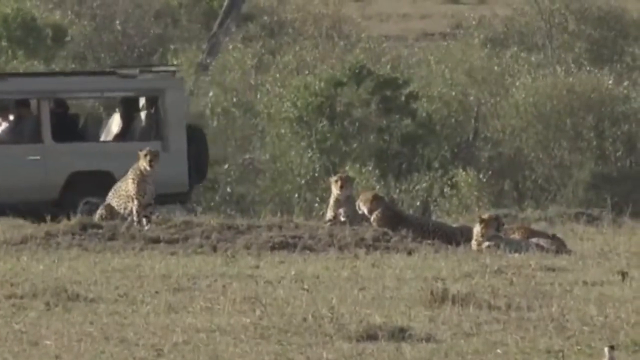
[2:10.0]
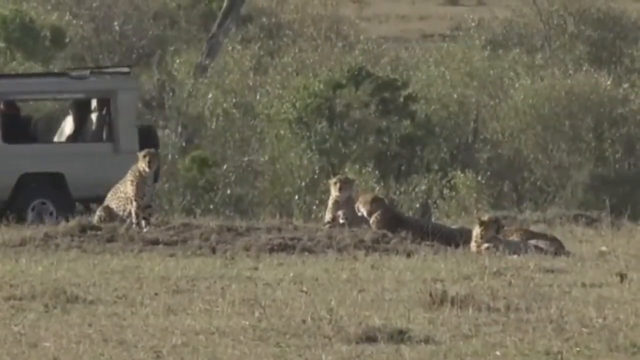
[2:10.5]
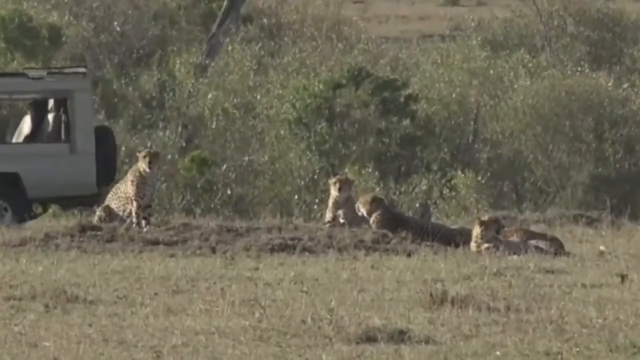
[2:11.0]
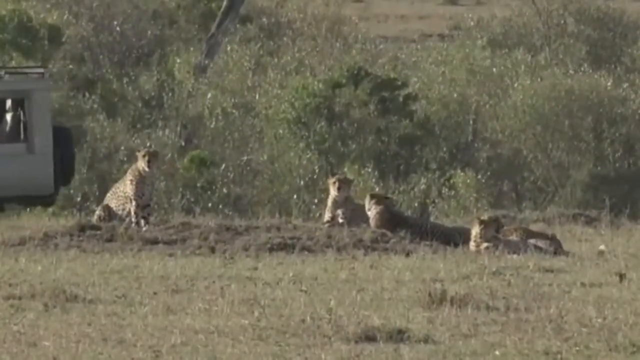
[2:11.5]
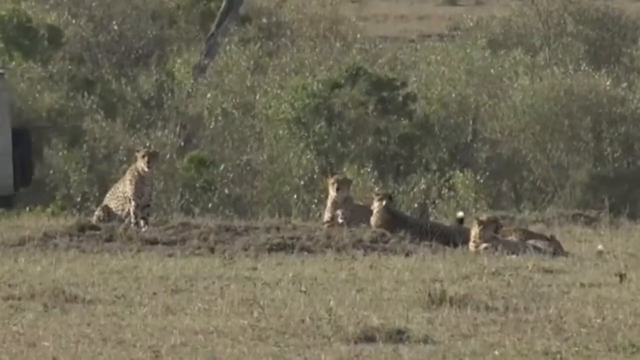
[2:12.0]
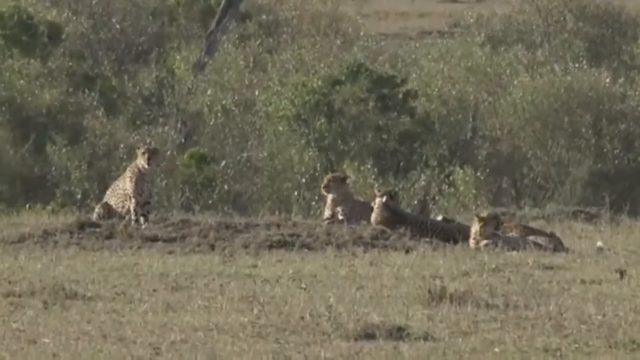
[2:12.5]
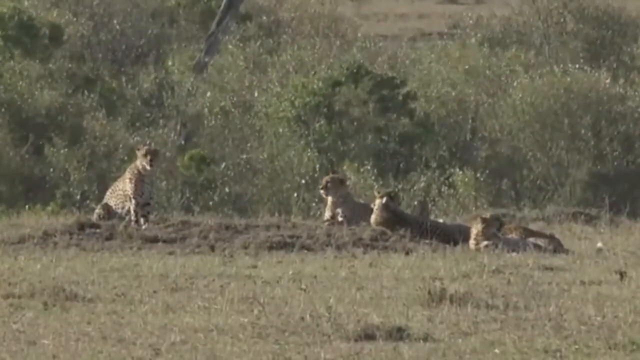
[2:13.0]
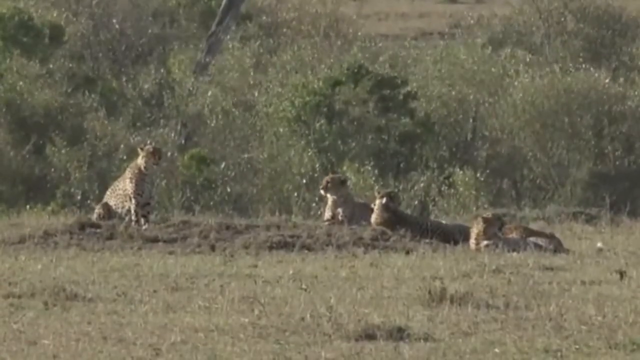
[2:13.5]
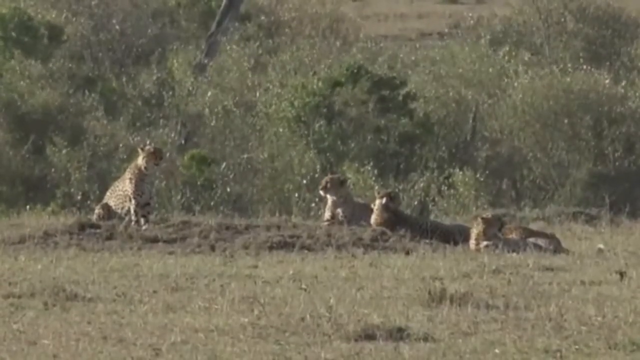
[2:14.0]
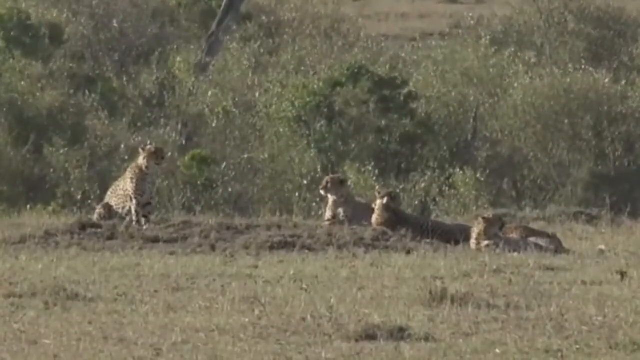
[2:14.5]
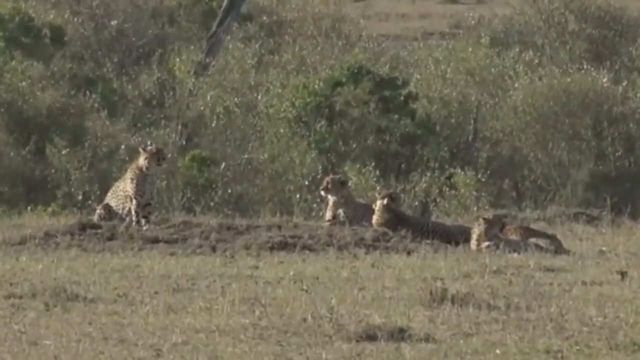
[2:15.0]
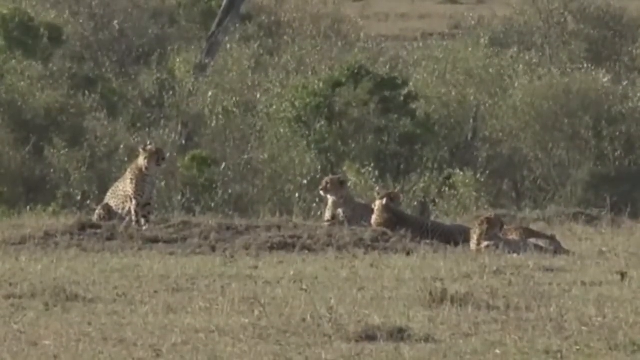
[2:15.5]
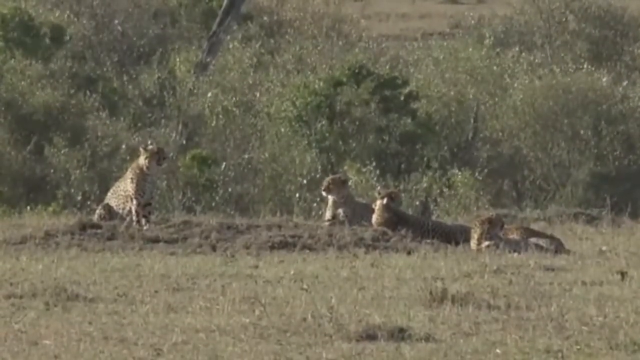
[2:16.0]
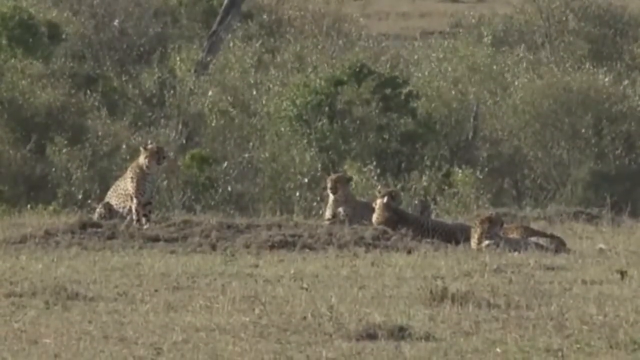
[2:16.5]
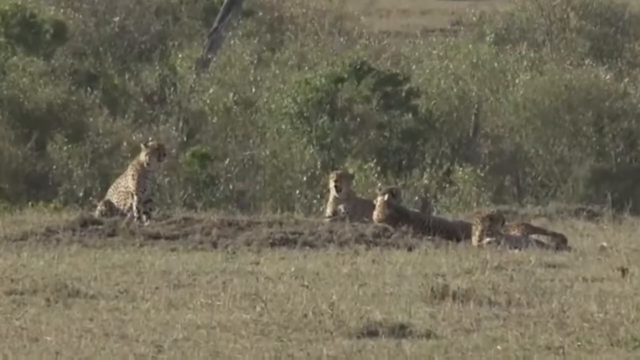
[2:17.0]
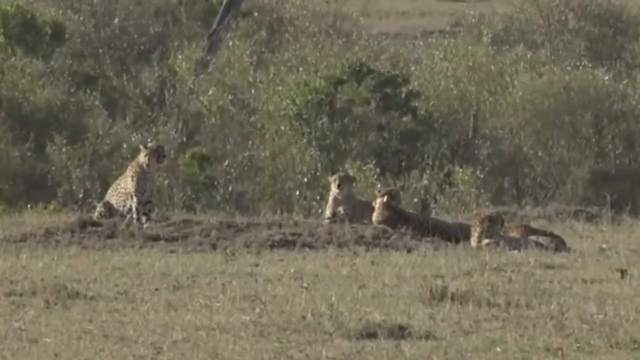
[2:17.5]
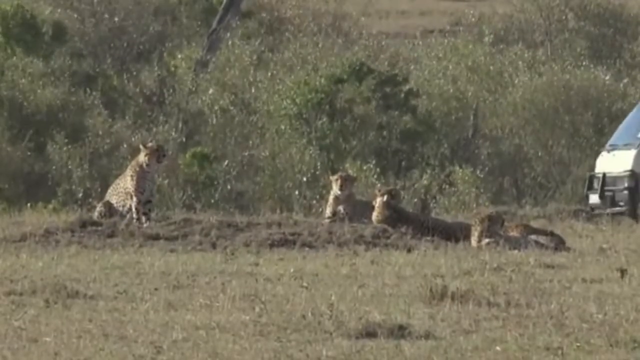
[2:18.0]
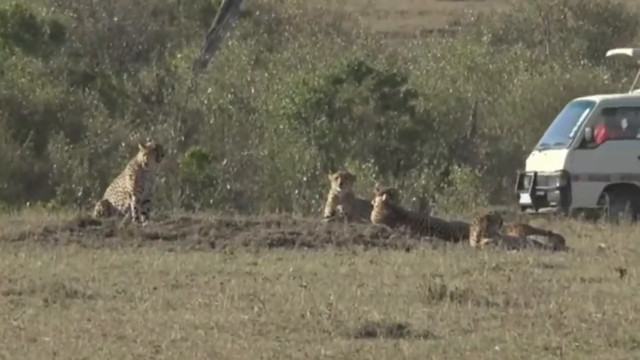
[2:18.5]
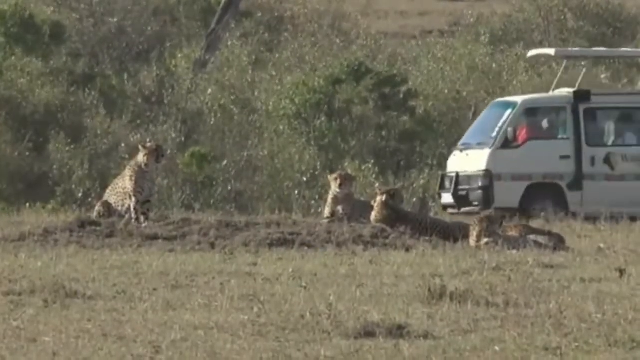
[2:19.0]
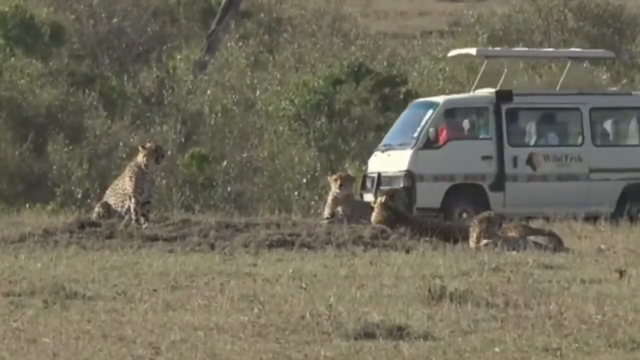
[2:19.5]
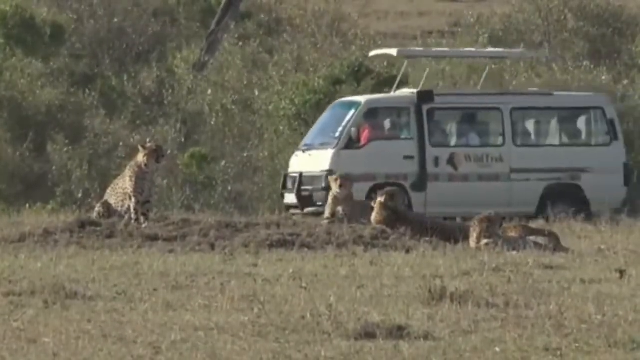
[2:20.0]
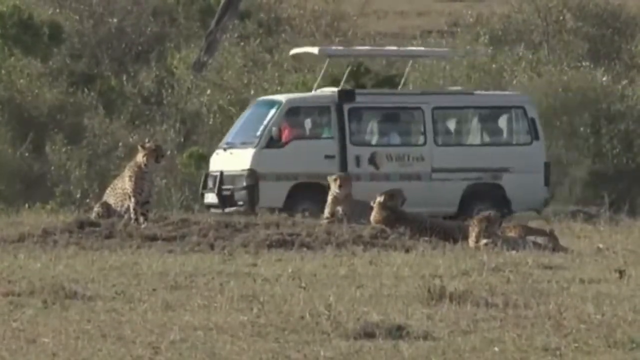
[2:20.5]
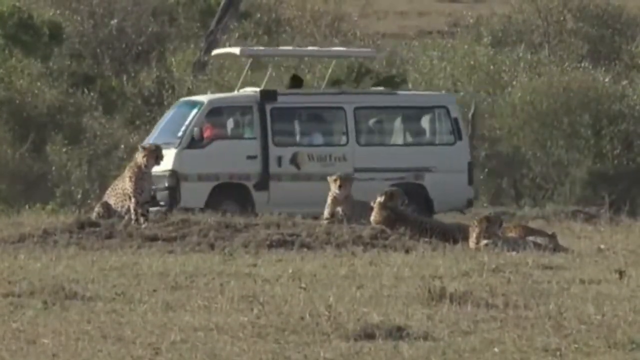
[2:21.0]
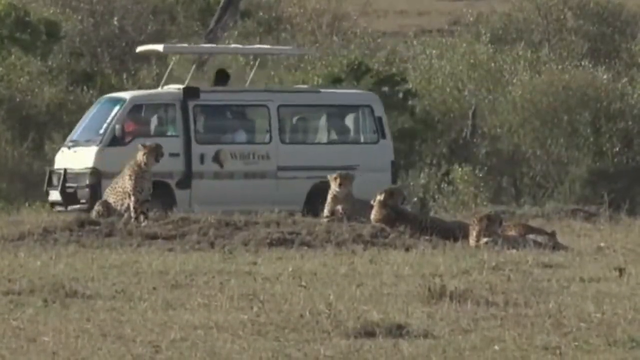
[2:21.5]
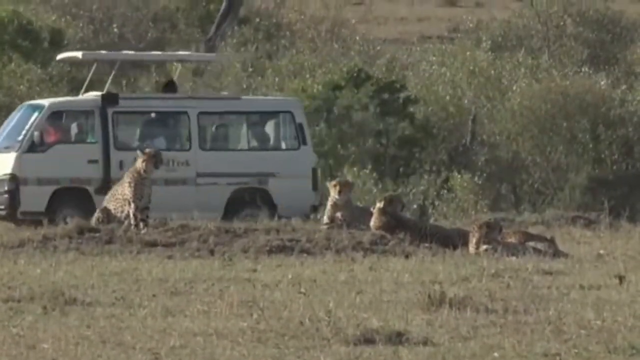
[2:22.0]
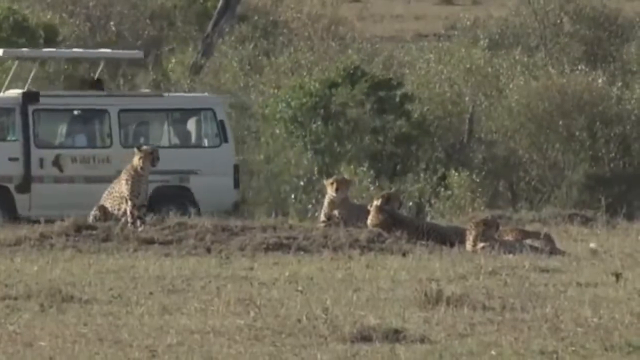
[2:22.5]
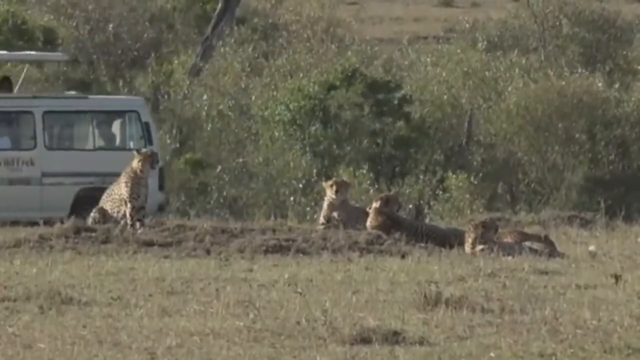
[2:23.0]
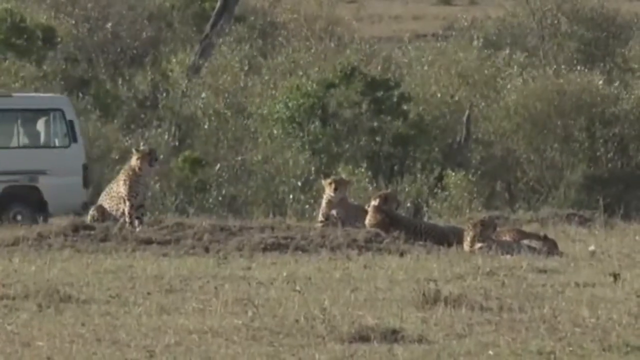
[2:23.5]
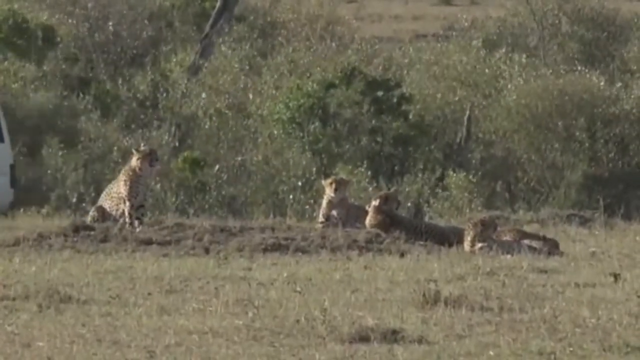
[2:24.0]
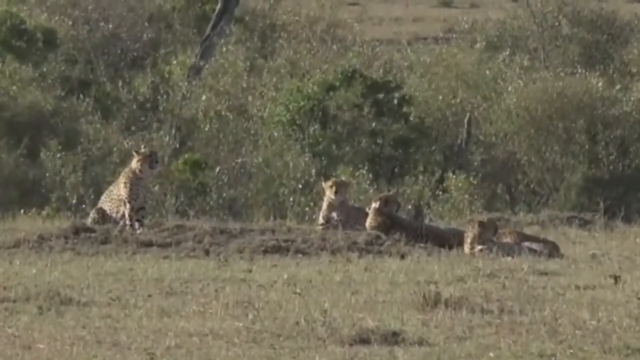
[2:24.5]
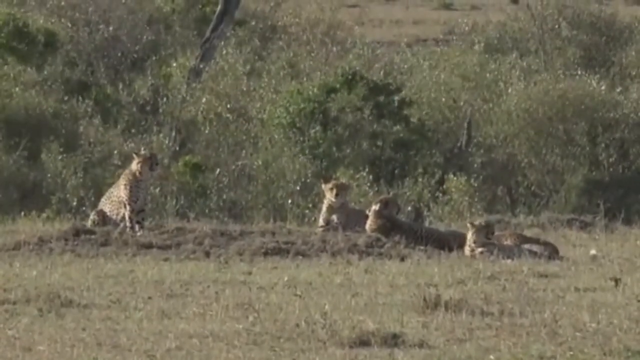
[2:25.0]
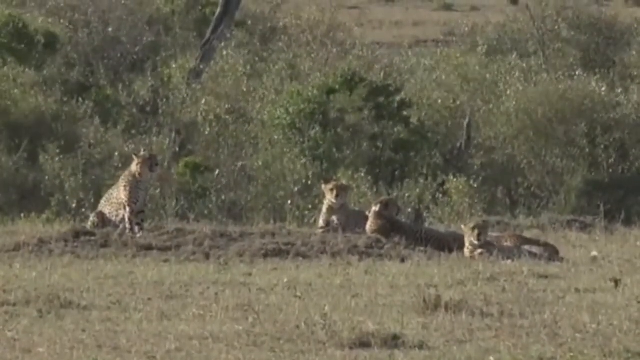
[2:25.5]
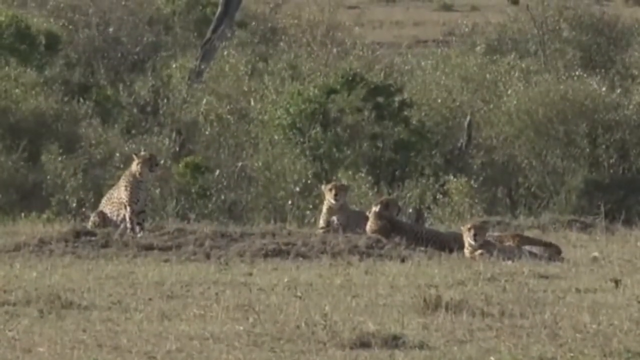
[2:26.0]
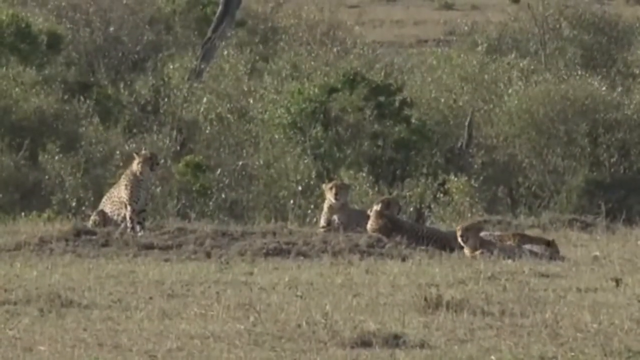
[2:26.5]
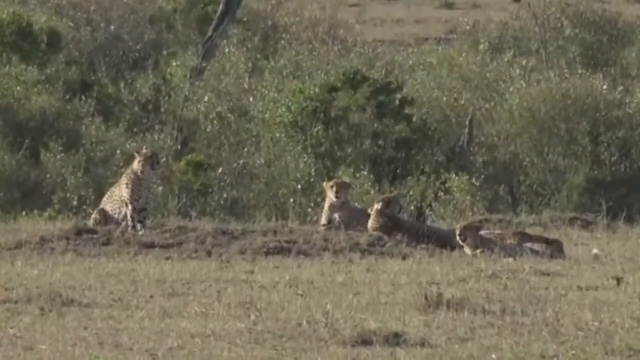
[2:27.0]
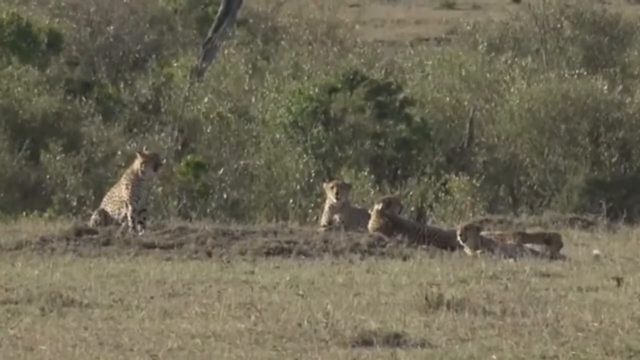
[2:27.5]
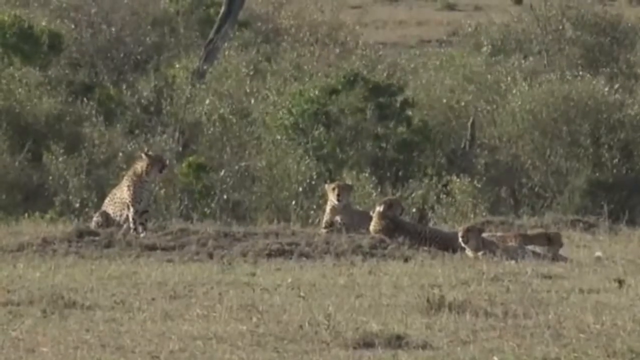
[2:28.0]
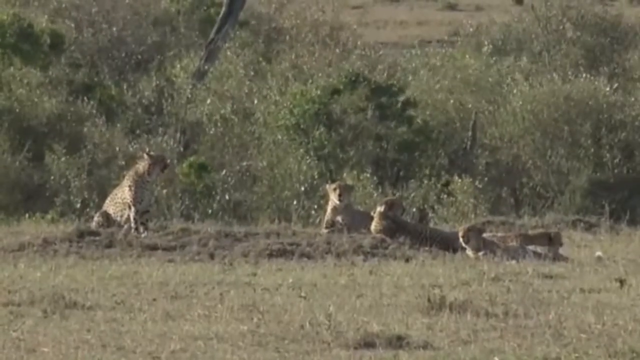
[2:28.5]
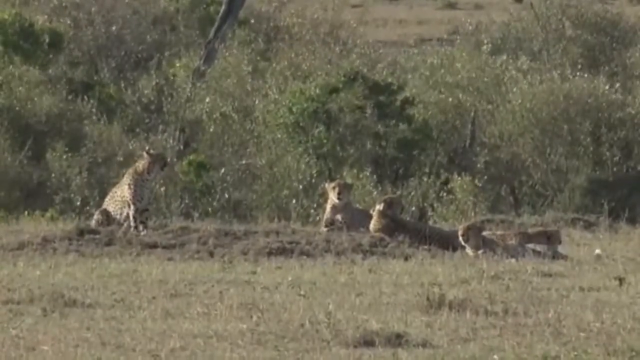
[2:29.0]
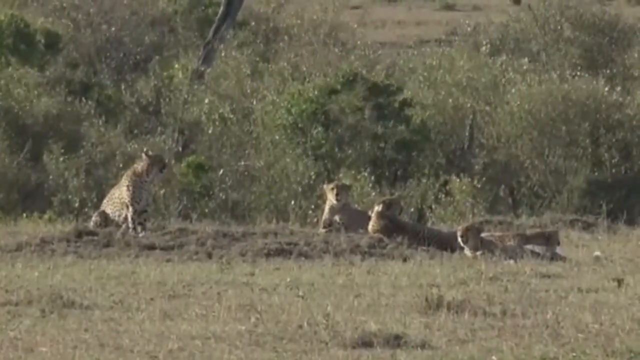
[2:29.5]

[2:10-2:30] A pack of cheetahs lounges in the sun in a natural environment, seated around a slight hump in the ground. Behind them, tourists in vehicles drive past the cheetahs; some of the vehicles have raised roofs. A cream-colored Land Rover style vehicle with a spare tyre on the back drives past. Then a small, almost VW bus type vehicle with a sliding door, a roof that pops up, and a number of seats inside, also cream-colored, slowly drives past the cheetahs. The cheetahs hardly turn their heads at all and don't seem alarmed by the passing vehicles. The scenery behind has some shrubs and small trees, but it is mostly a barren, desolate, desert-like landscape.